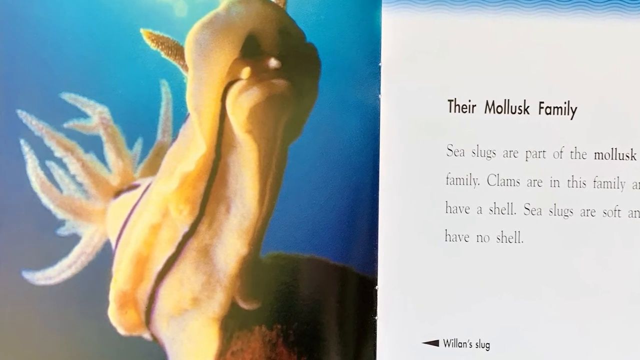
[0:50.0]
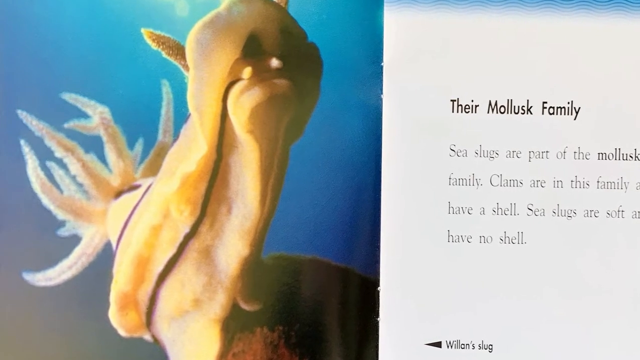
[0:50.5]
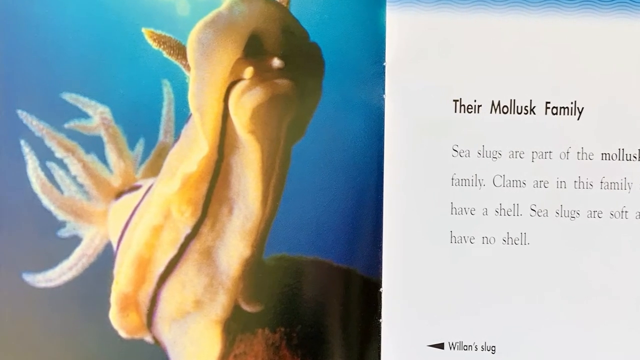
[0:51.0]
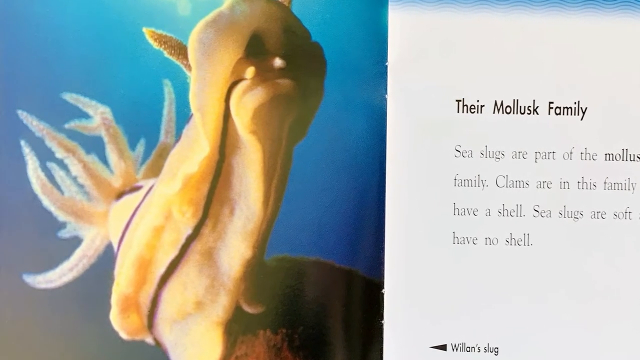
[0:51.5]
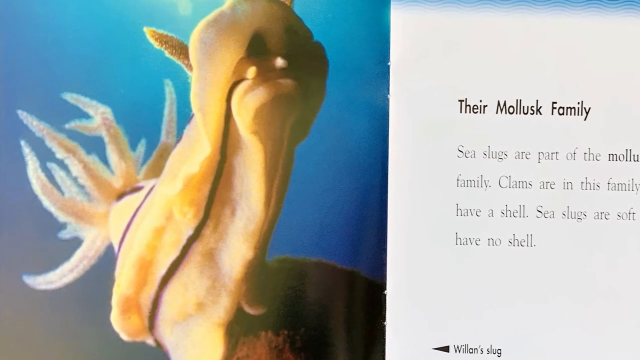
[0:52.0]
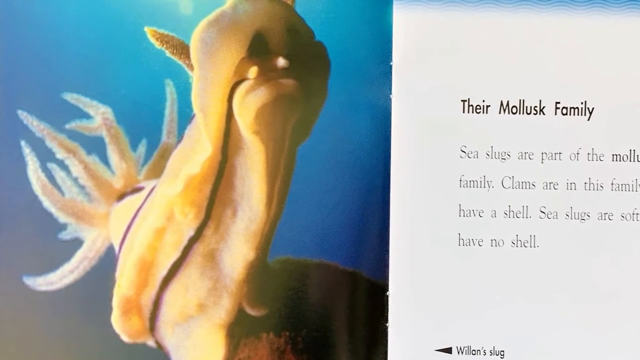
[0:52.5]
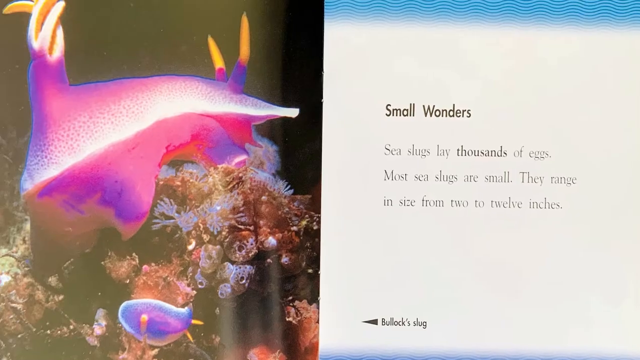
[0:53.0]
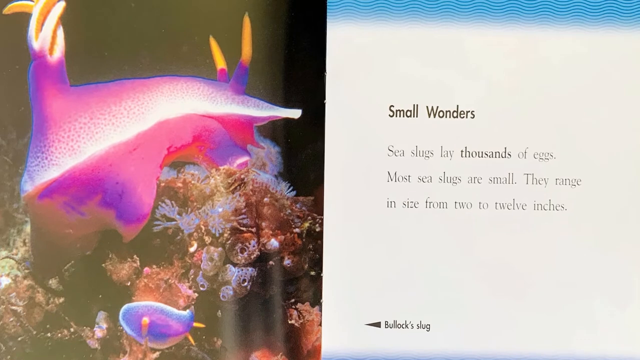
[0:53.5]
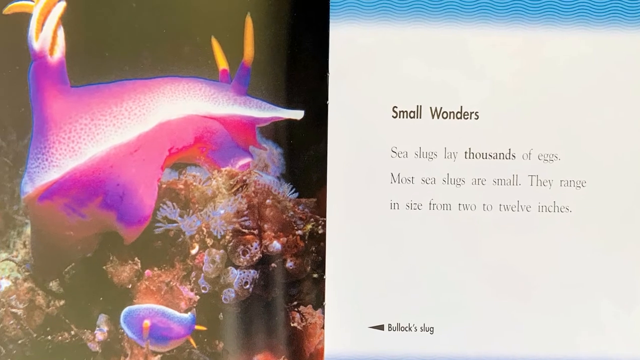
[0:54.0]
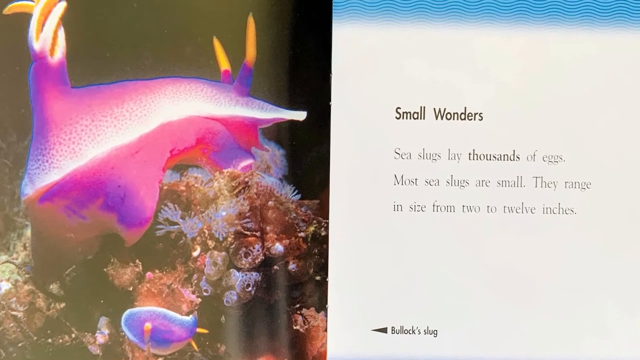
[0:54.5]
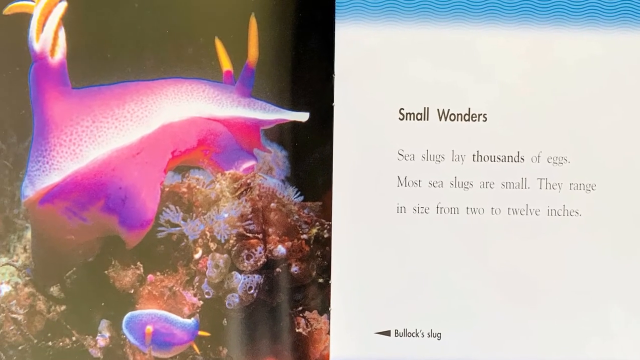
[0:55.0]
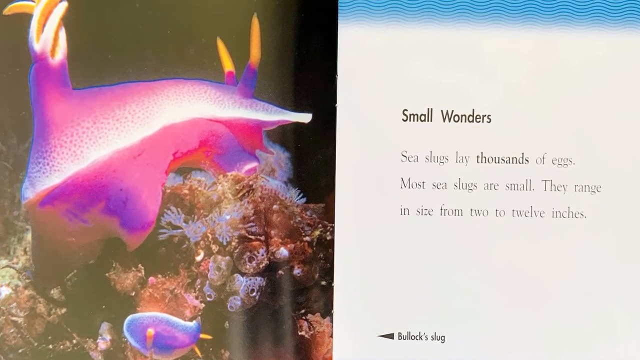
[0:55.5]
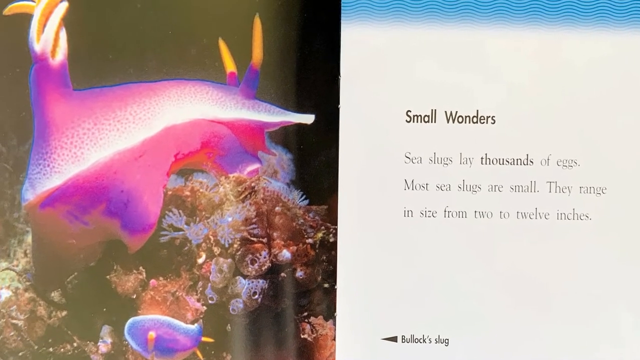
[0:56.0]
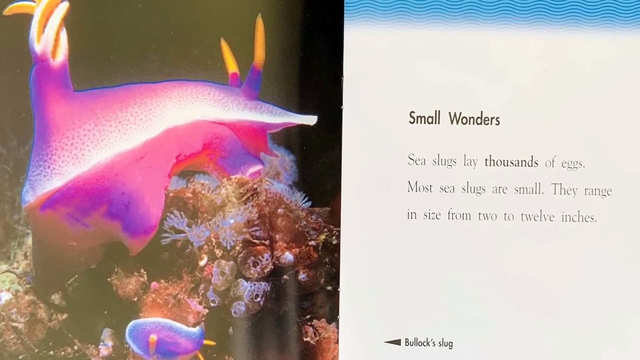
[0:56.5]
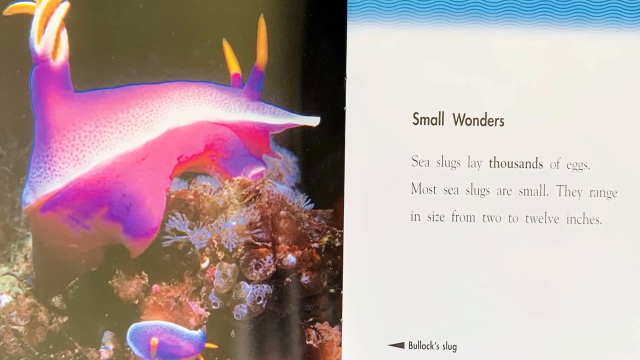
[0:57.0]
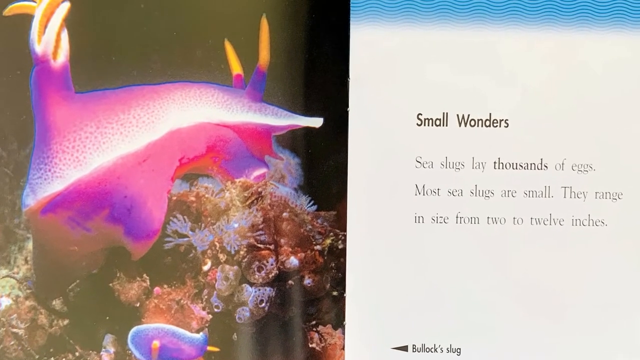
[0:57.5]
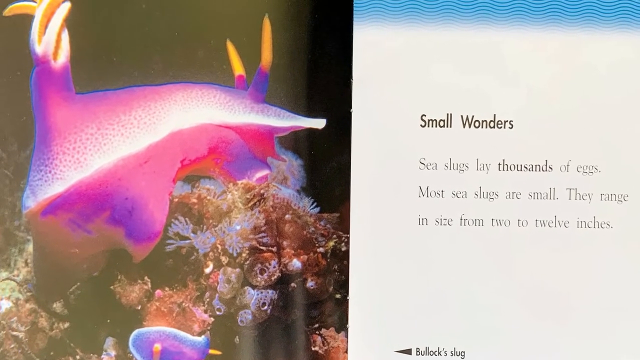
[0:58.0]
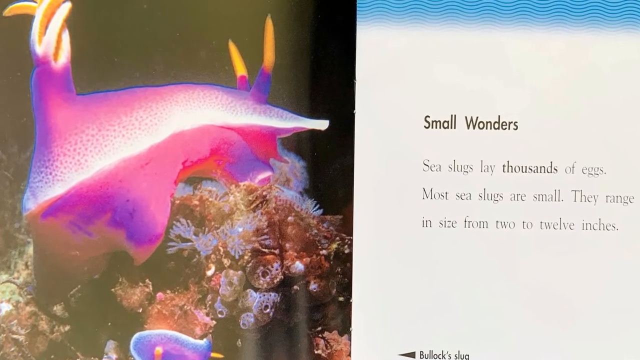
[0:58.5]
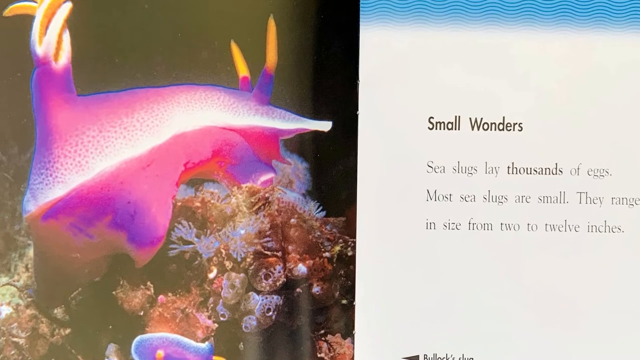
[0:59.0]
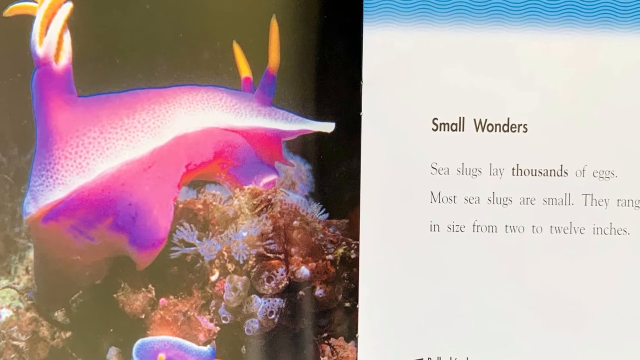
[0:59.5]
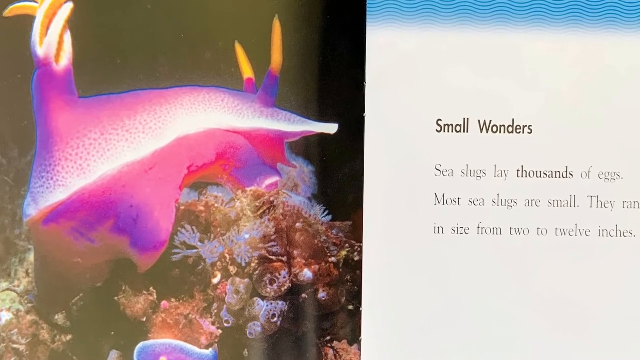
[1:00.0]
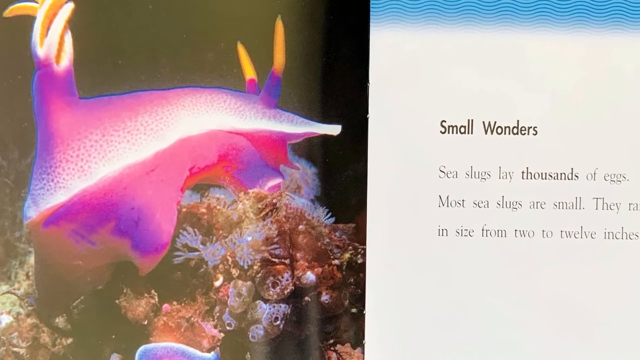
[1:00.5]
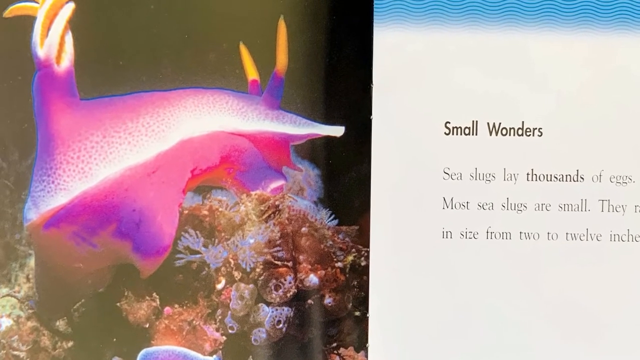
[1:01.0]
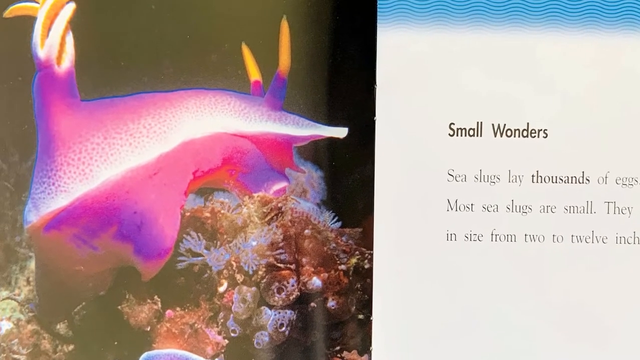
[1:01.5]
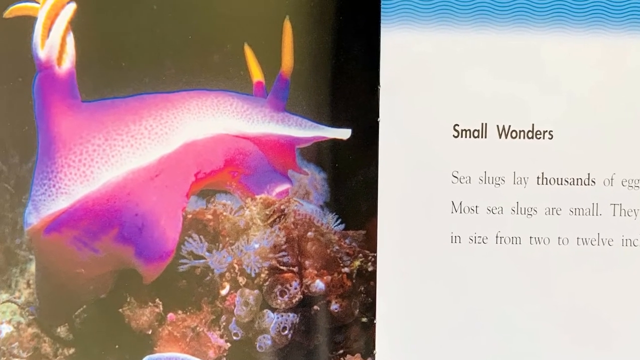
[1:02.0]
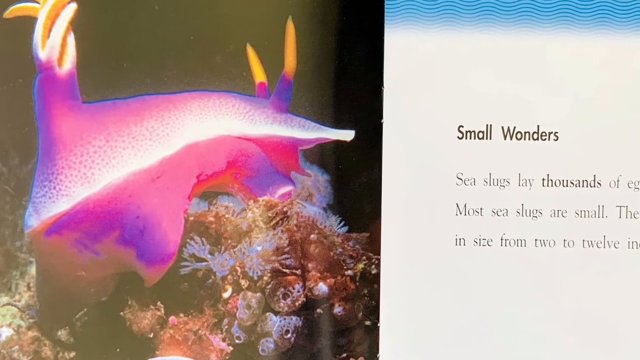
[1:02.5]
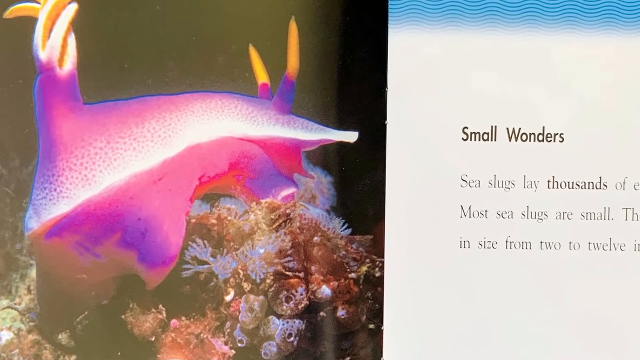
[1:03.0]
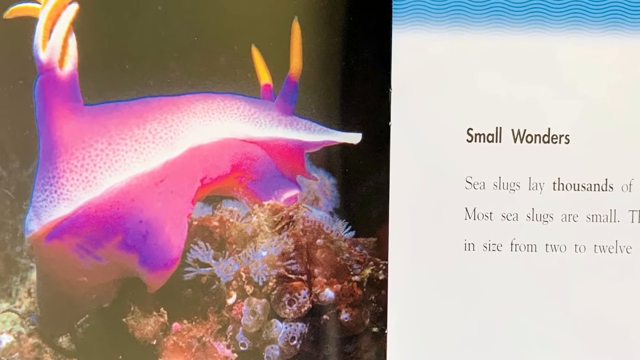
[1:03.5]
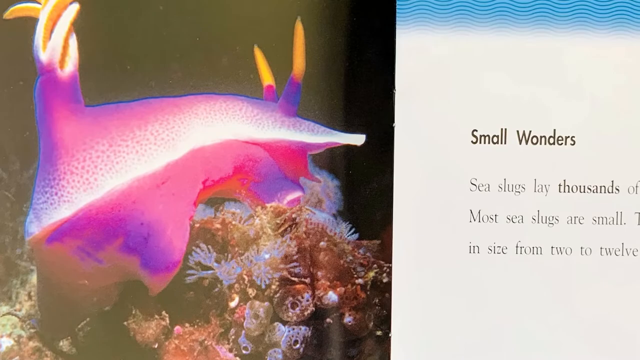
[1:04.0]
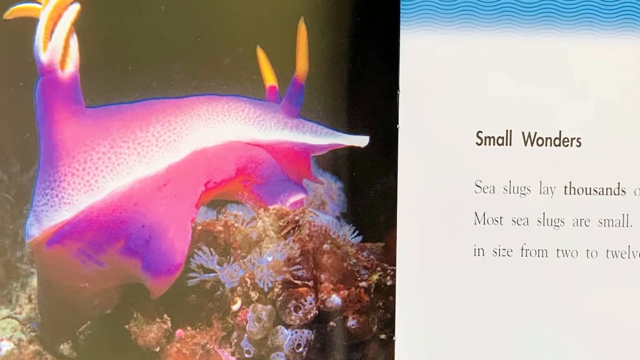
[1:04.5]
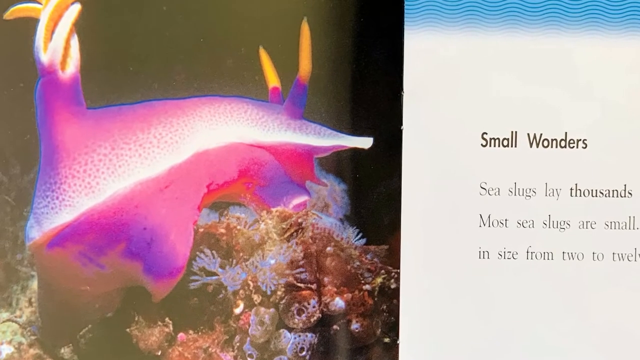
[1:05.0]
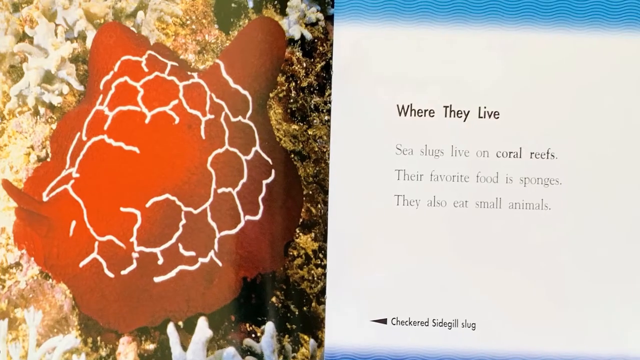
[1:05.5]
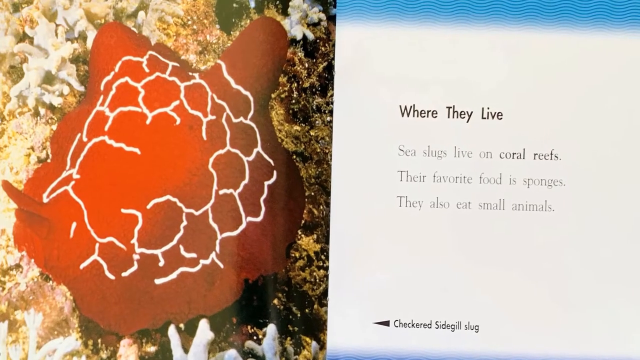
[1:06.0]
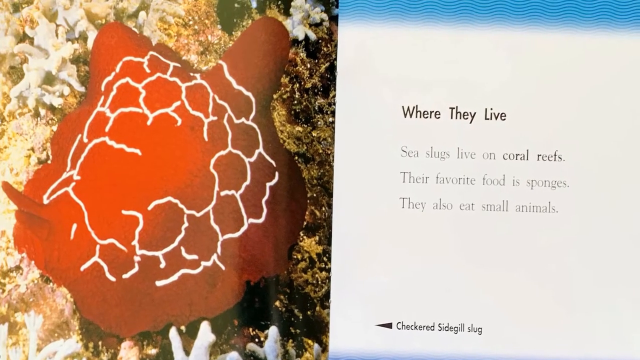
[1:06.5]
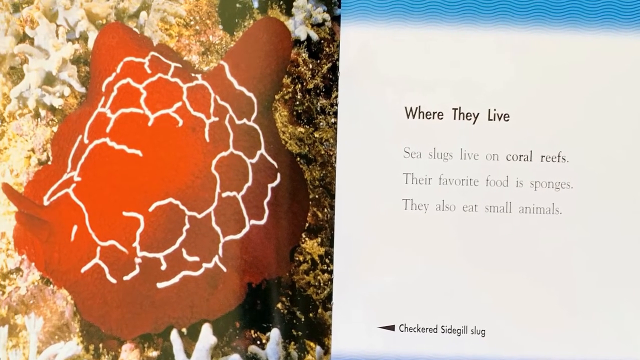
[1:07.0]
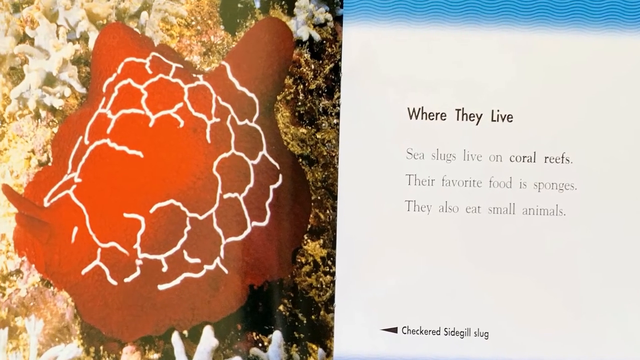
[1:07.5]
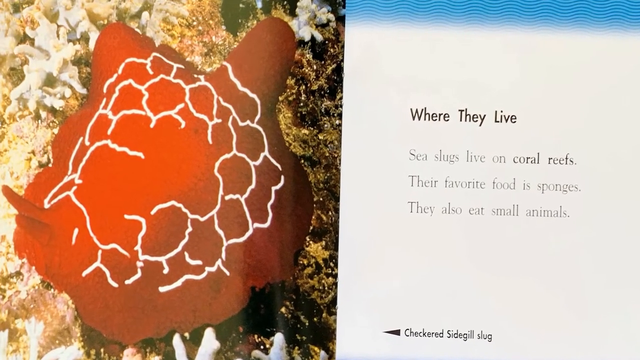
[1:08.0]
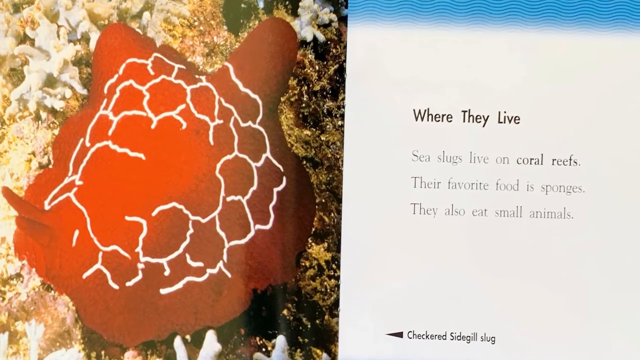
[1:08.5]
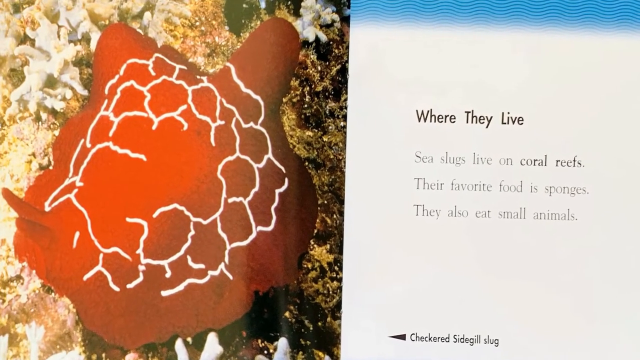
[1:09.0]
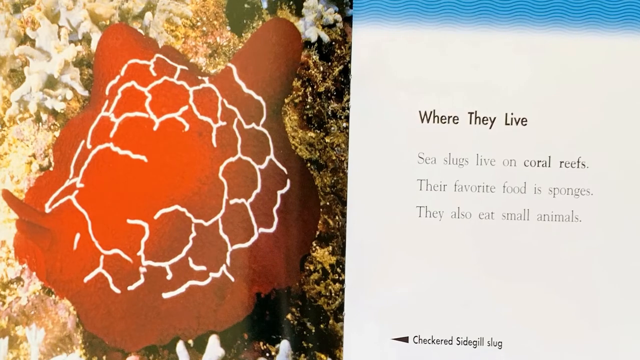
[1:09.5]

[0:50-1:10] A side-by-side spread shows, on the left, a large yellow slug in the ocean with thin dark purple lines down its side, a tail that looks like long, thin tails bunched together, and small horns on top of its head. On the right, a white page has the bold black heading "their mollusk family" at the top, with less bold black text beneath reading "sea slugs are part of the mollusk family clams are in this family and have a shell sea slugs are soft and have no shell." At the bottom left of the page, a black arrowhead points to the image on the left, next to the label "Willens Slug." The view zooms in on the image of the slug. The screen changes to another two-page spread. On the left is an image of a pink slug with a white strip down its back, a wider bottom body that flares out somewhat like wings, and a narrower head, with two antennae that are purple and yellow at the top. It appears to be sitting on a bunch of coral. On the white page on the right, a heading at the top reads "small wonders," and beneath it, "sea slugs lay thousands of eggs. Most sea slugs are small they range in size from 2 to 12 inches." At the bottom, a black arrowhead points to the left, next to the label "bollocks slug." Another two-page spread follows. The left side shows a large, circular, blob-shaped brown slug with jagged white lines forming round shapes on its back, sitting on light brown coral. The white page on the right has the heading "Where They Live" and beneath it, "Sea slugs live on coral reefs. Their favorite food is sponges. They also eat small animals." At the bottom left of the page, a black arrowhead points to the image on the left, next to the label "Checkered Sidegill Slug."